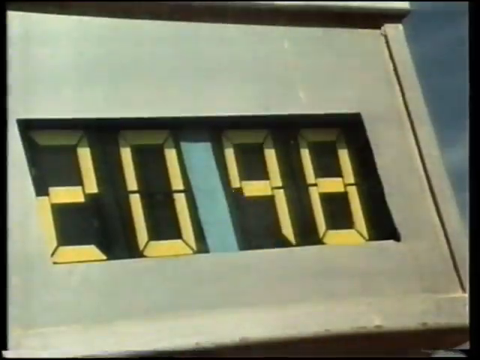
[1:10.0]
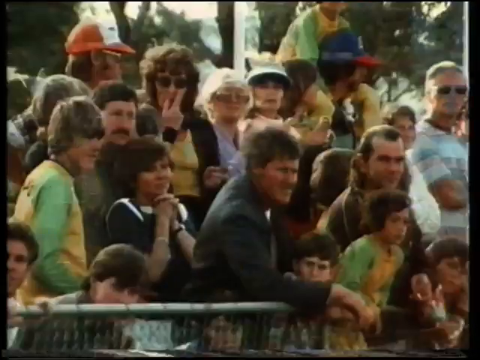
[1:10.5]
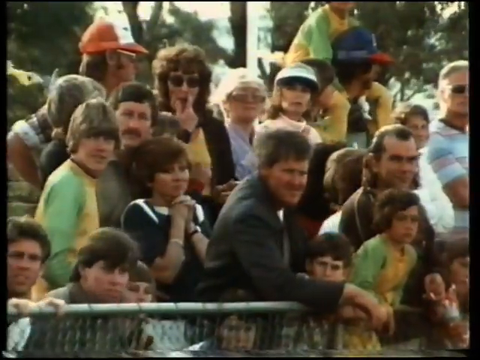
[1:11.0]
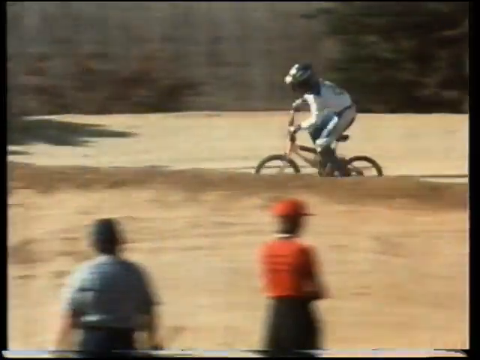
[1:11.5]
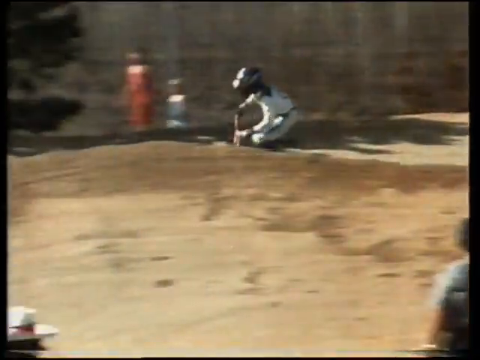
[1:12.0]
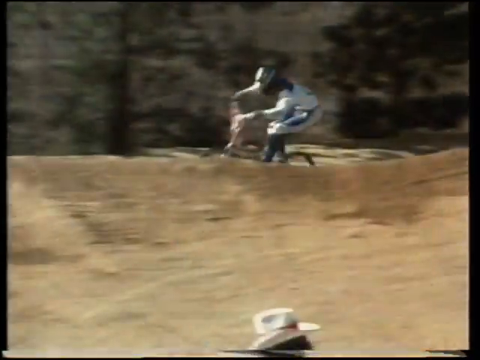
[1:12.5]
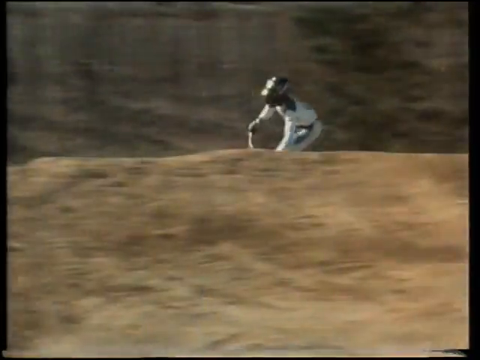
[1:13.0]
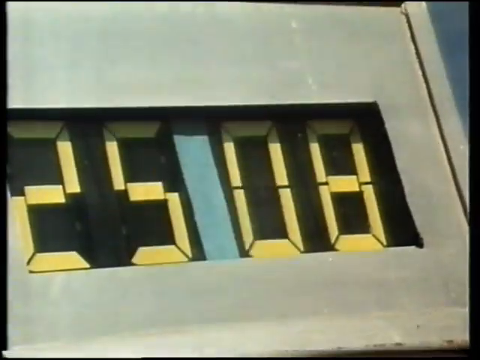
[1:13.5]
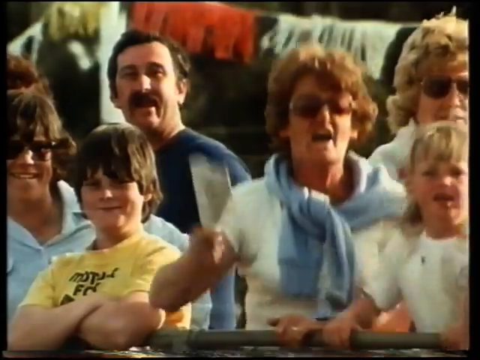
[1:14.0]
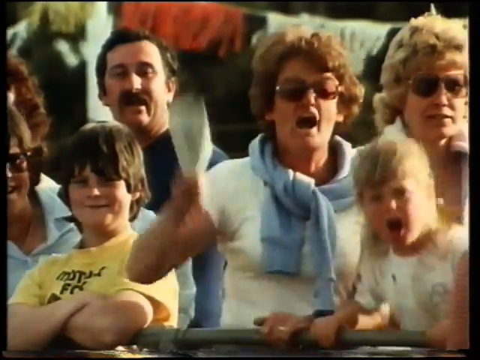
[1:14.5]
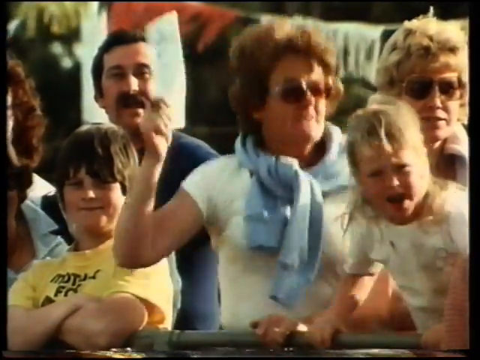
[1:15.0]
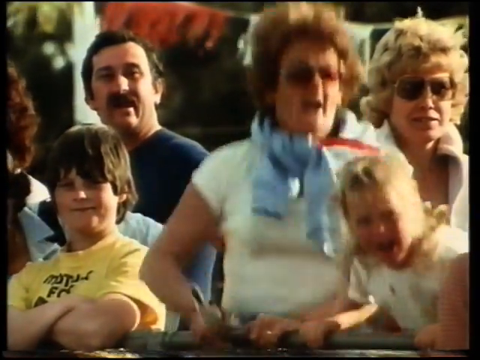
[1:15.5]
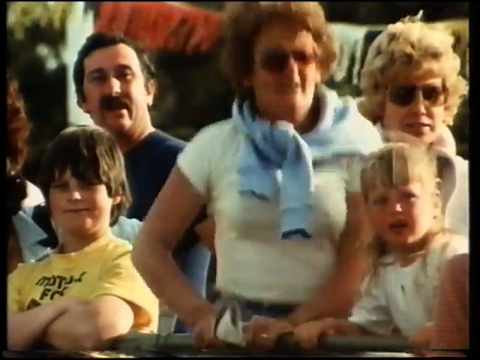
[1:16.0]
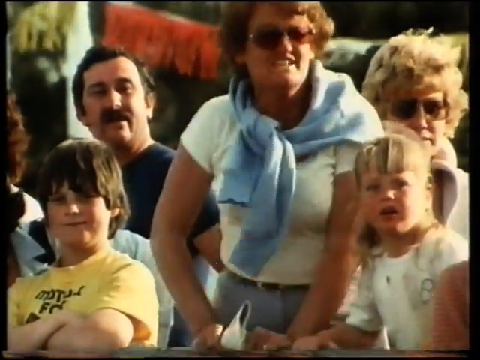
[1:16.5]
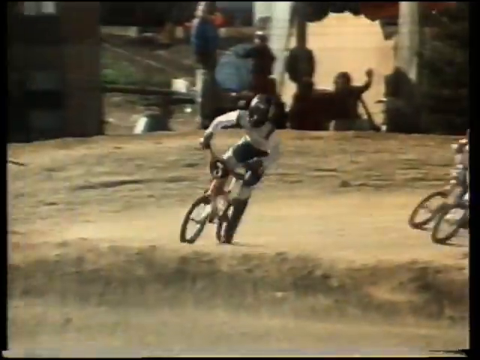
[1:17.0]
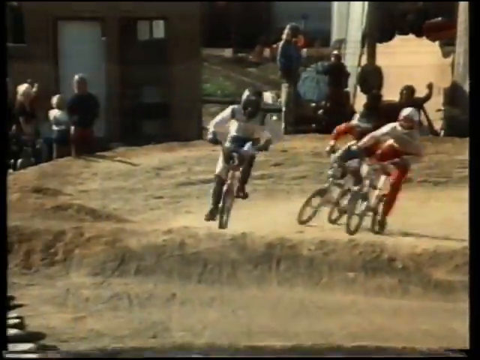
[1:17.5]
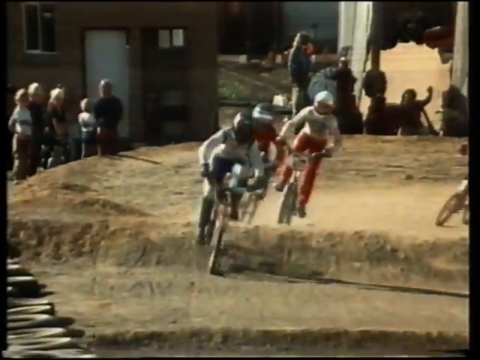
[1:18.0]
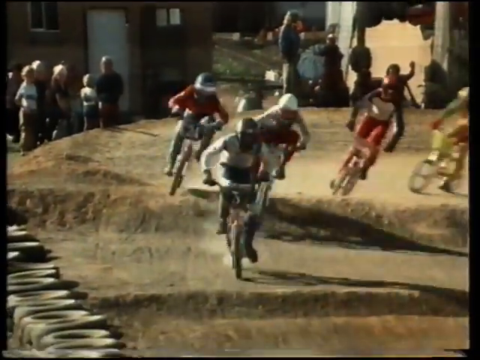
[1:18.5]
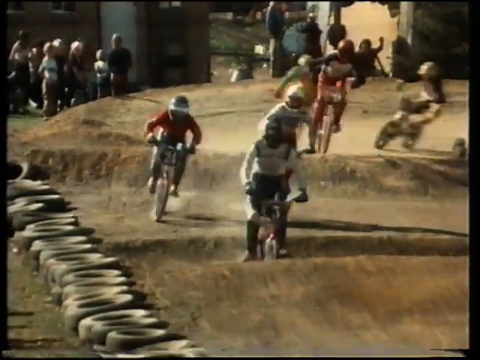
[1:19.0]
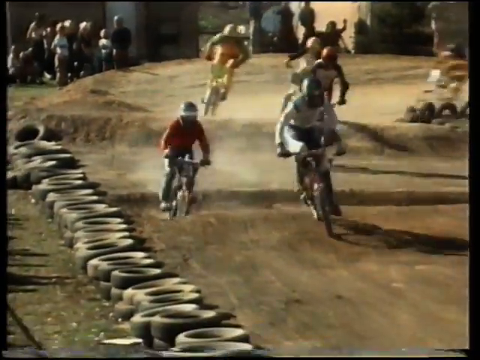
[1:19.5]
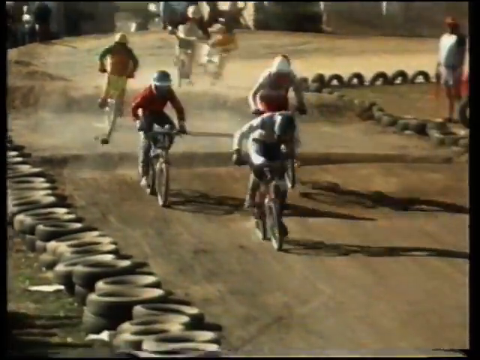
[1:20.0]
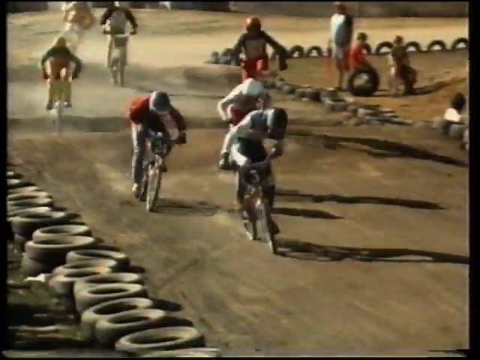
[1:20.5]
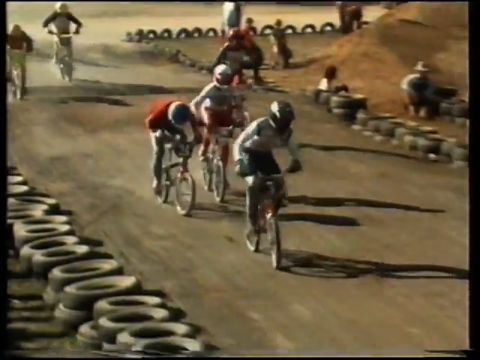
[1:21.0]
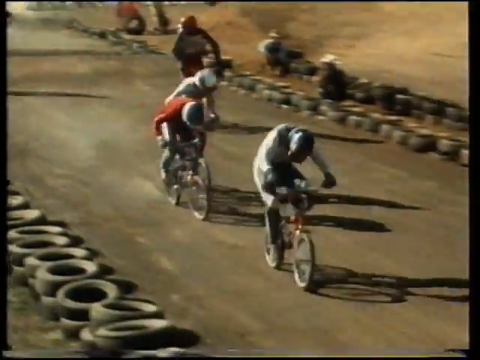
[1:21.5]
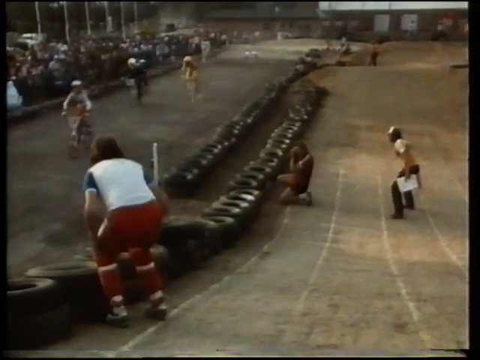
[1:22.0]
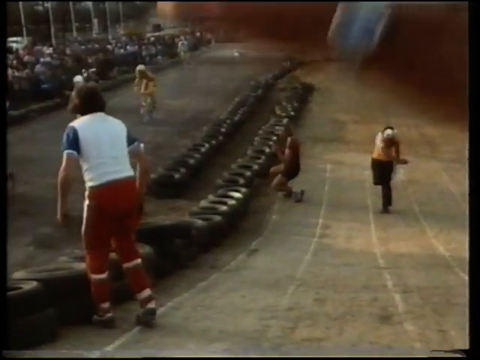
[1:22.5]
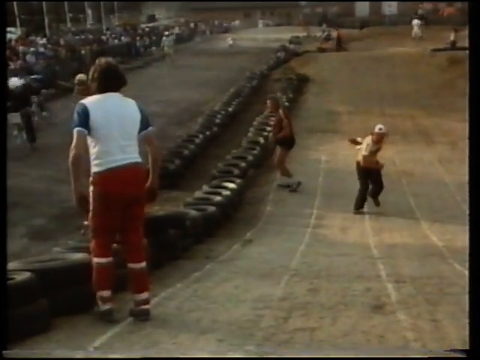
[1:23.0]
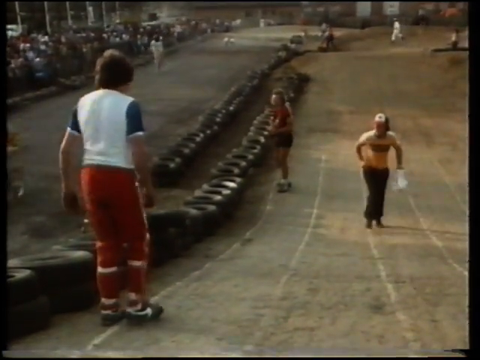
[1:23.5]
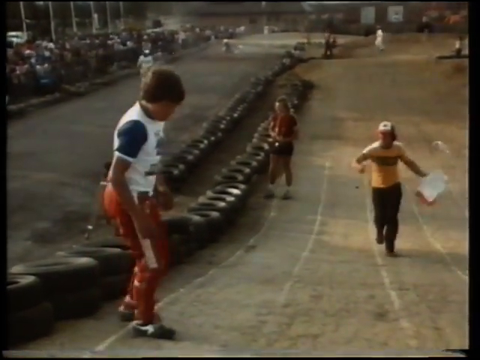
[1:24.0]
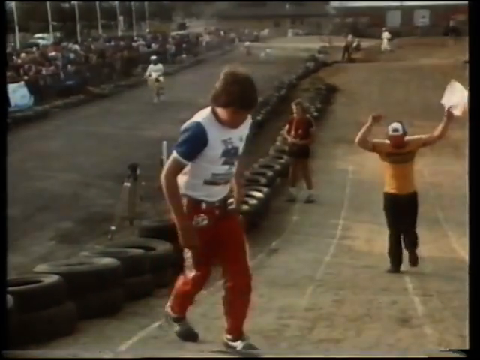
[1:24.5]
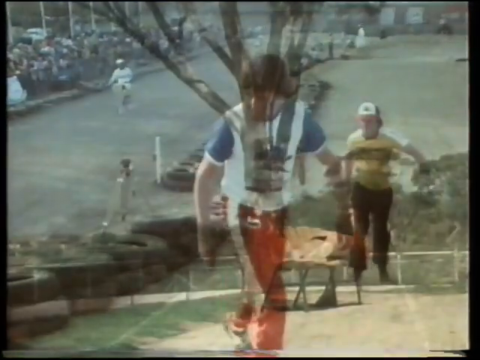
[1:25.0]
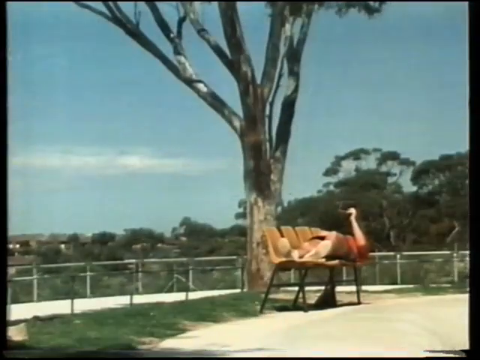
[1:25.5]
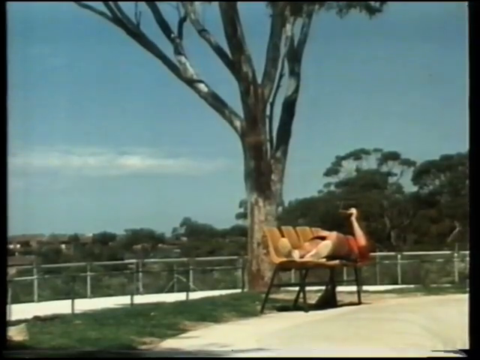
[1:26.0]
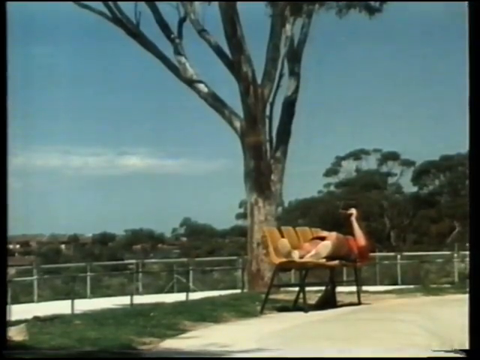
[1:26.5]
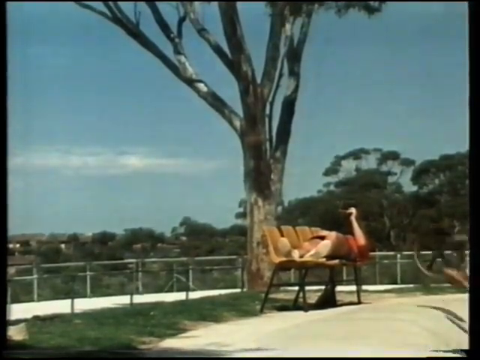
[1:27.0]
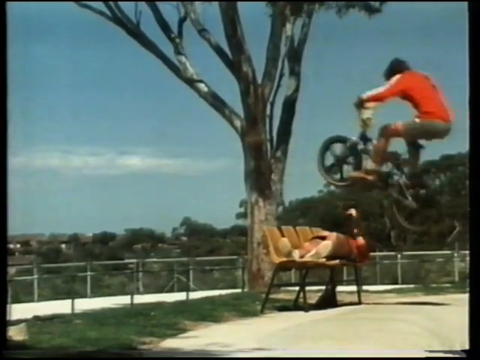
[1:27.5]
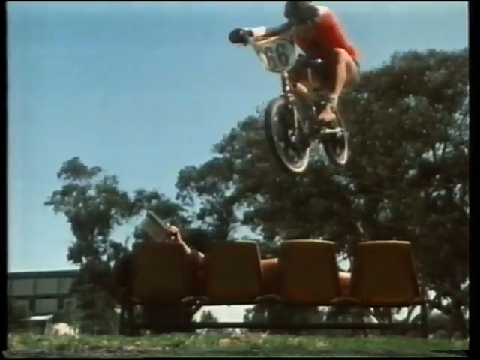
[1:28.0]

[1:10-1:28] With the title "1980s BMX racing Australia" on screen, the end of a race is shown: the kid in white is clearly in front with some kids right on his tail, while the family cheers. Then a biker jumps over a bench that is clearly not on the track, with a turkey on the bench, and everyone cheers. The mom in a white shirt and a light blue sweater around her neck is shown with a little blonde girl or boy with a mullet next to her, both cheering very passionately, presumably for her son or a family member racing. The video ends with someone jumping over a fence with a turkey in it. The racetrack is full of people watching, with 80s hair, facial hair and tight clothes, t-shirts tucked into sweatpants and jeans. The kid in front, who led the whole way, holds off the other kids in red behind him, who try to make a late push.